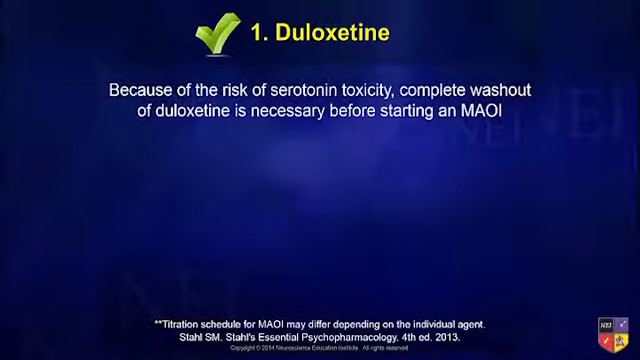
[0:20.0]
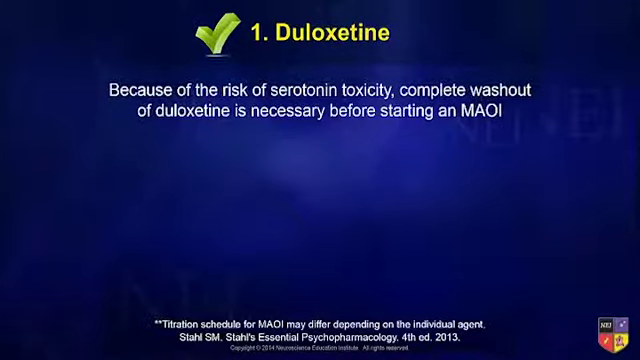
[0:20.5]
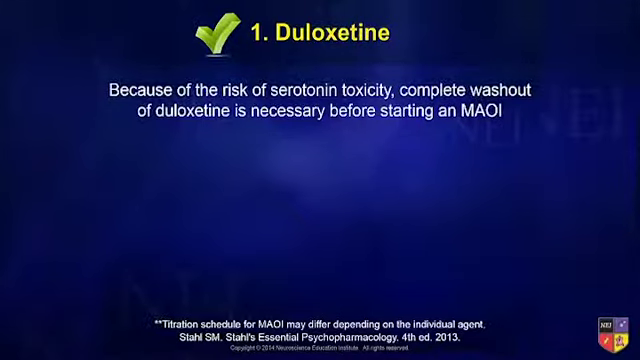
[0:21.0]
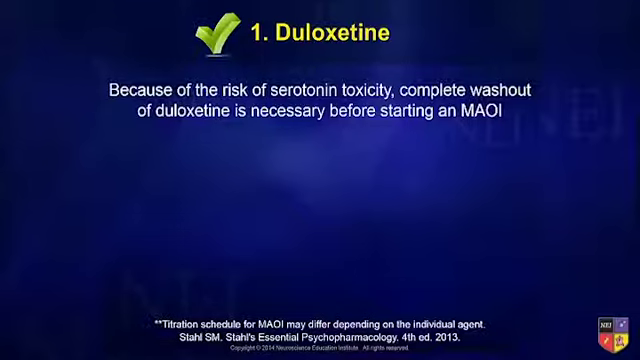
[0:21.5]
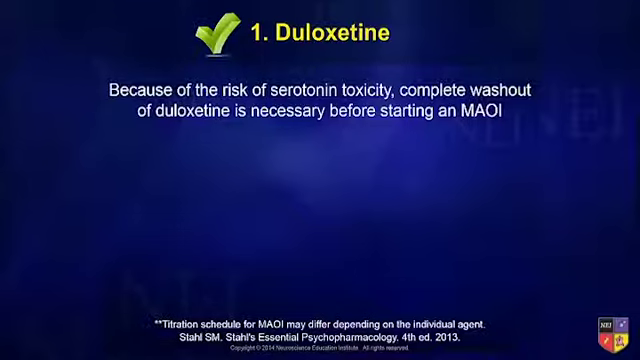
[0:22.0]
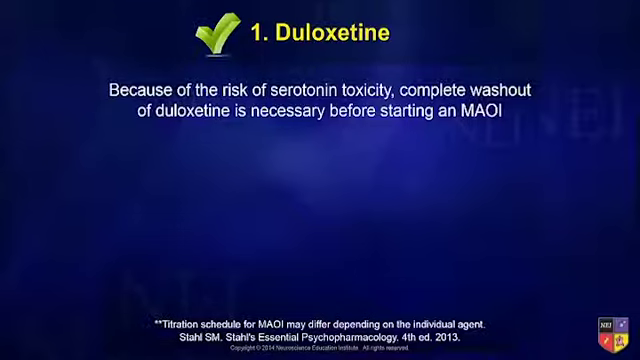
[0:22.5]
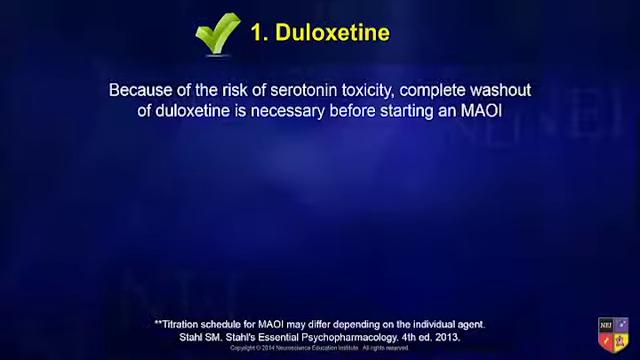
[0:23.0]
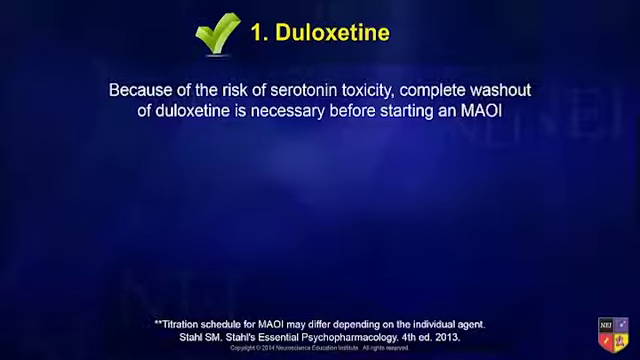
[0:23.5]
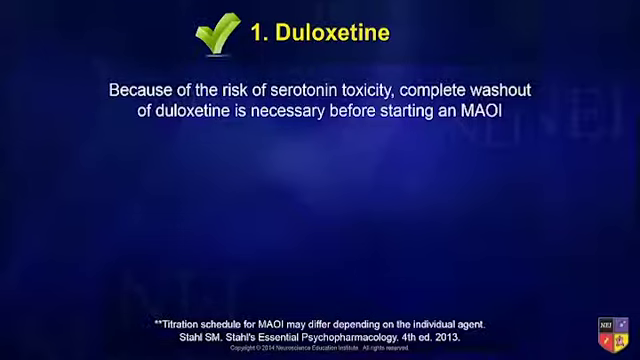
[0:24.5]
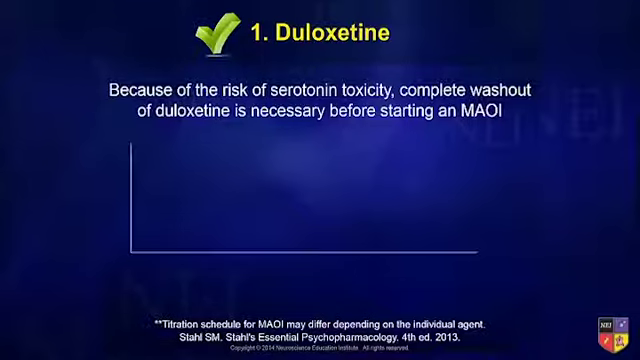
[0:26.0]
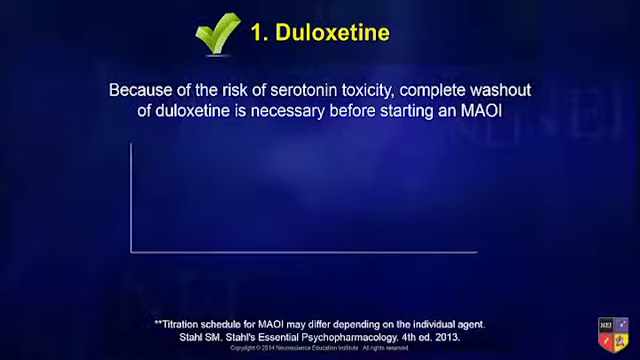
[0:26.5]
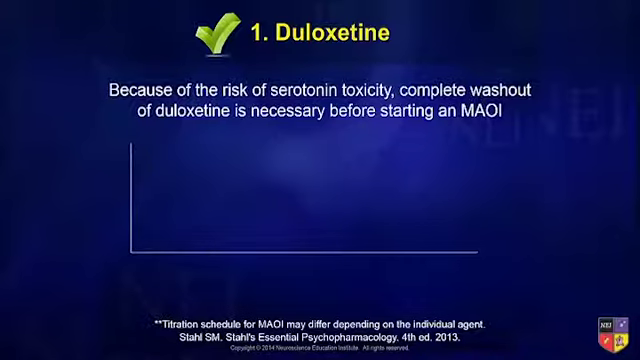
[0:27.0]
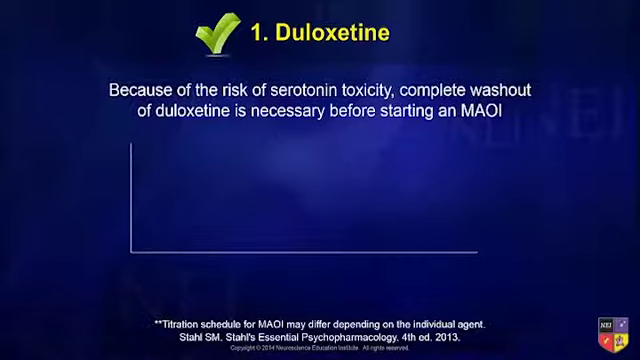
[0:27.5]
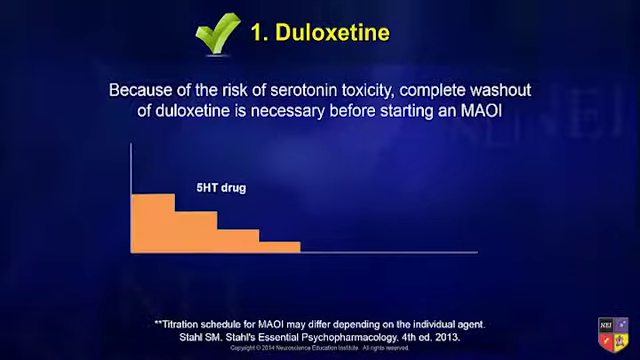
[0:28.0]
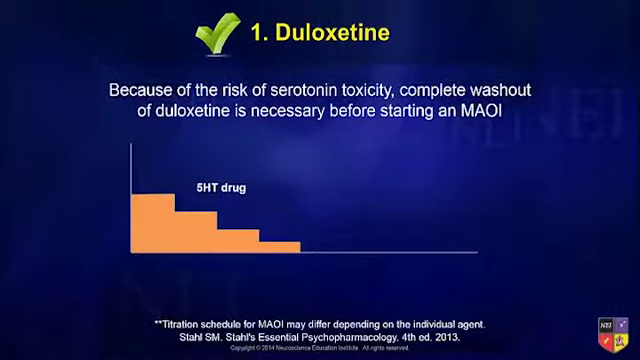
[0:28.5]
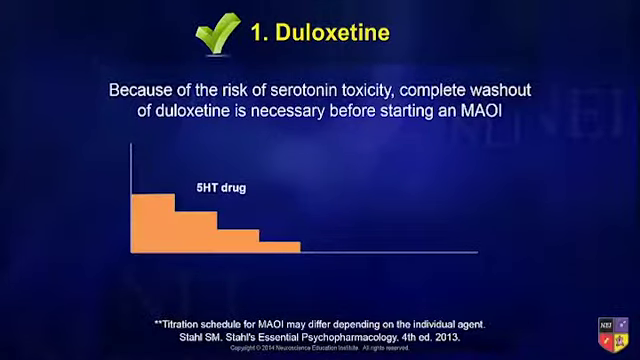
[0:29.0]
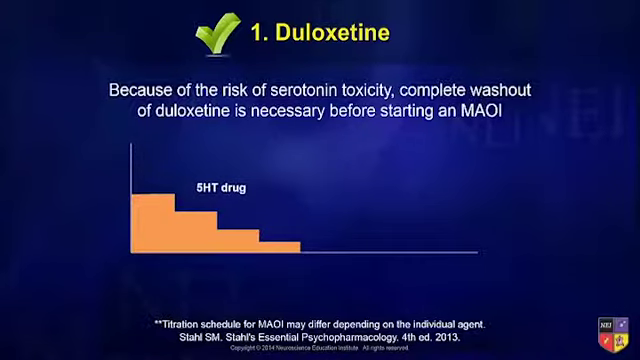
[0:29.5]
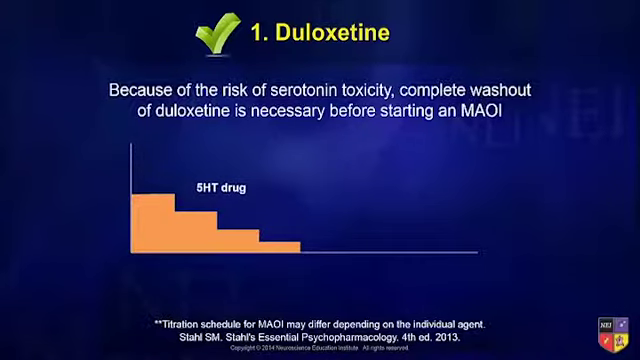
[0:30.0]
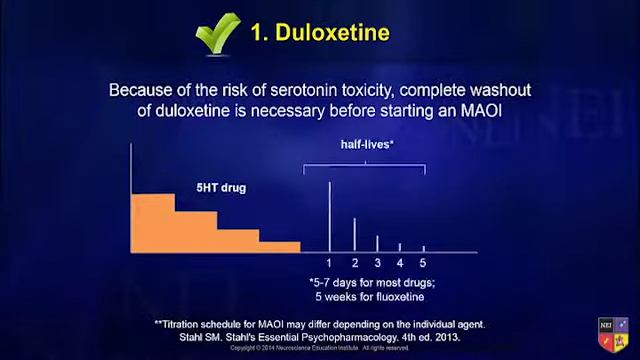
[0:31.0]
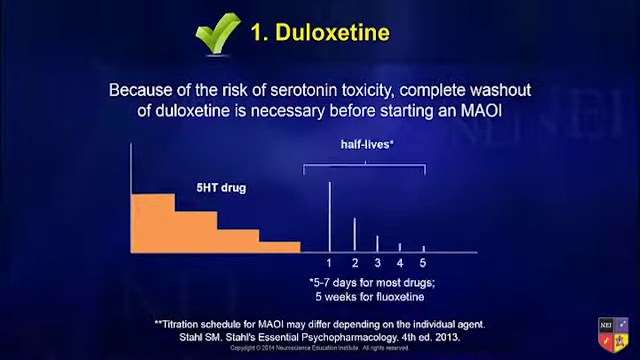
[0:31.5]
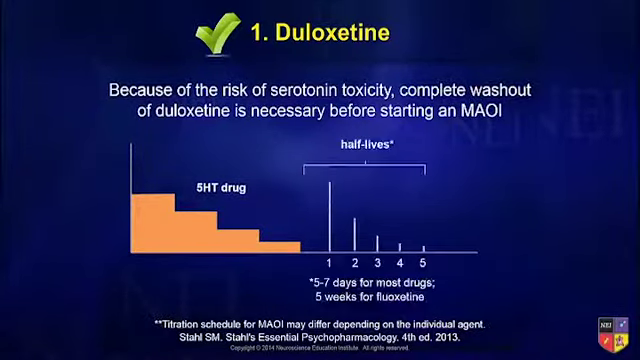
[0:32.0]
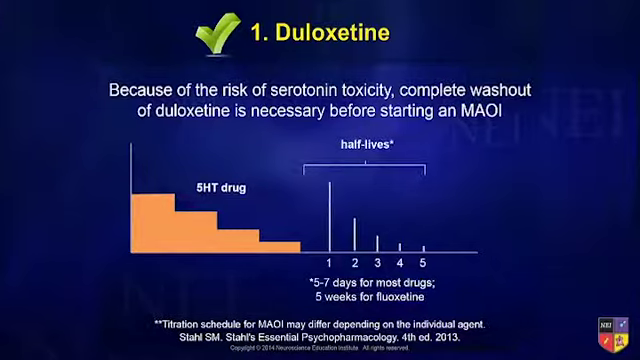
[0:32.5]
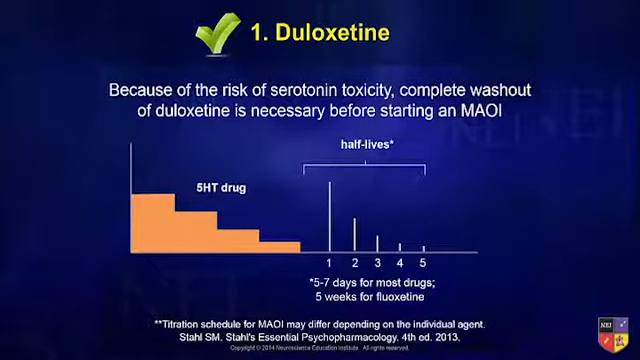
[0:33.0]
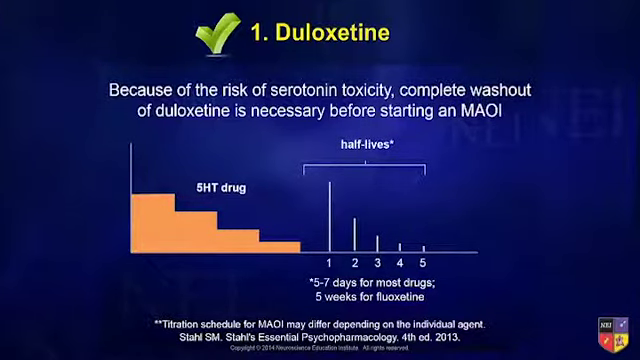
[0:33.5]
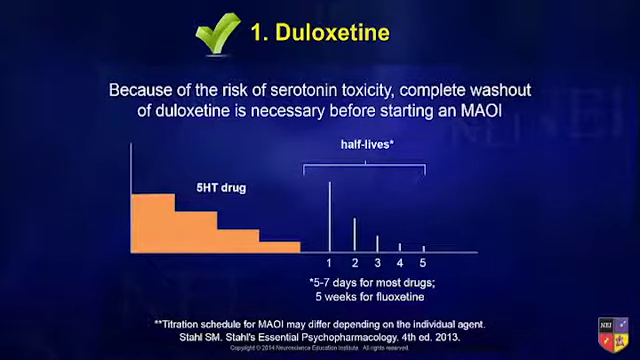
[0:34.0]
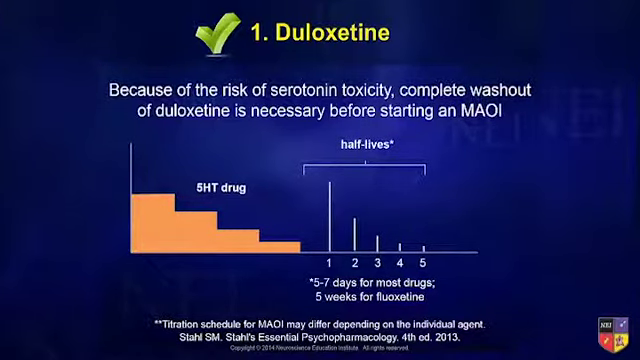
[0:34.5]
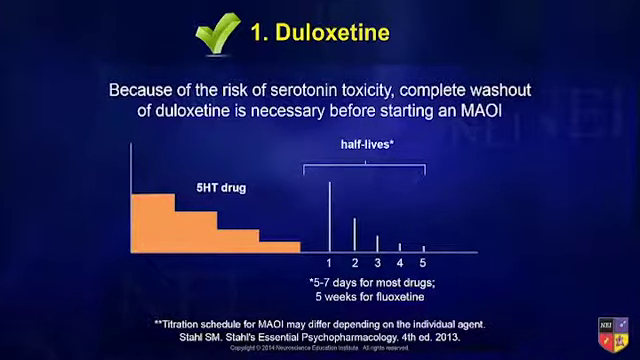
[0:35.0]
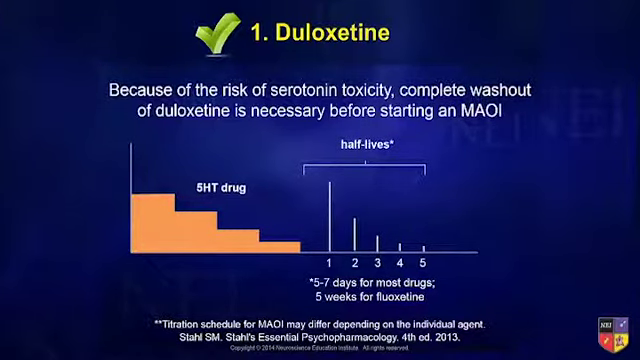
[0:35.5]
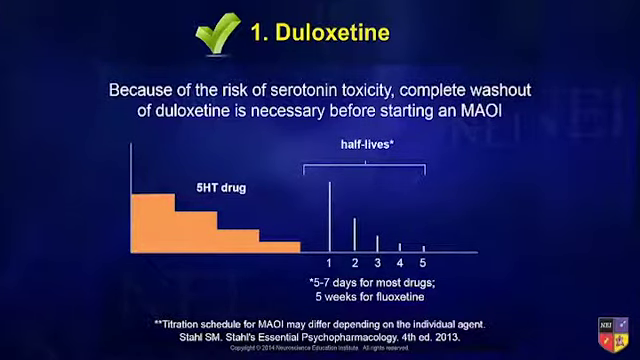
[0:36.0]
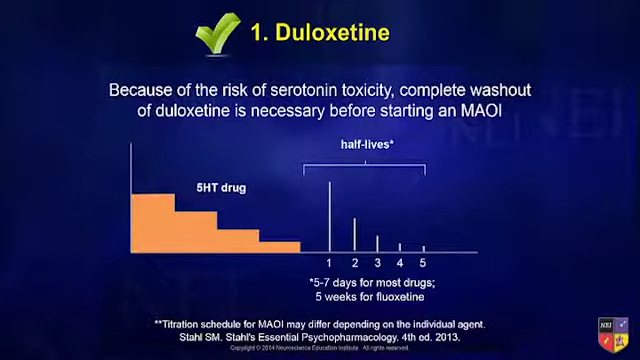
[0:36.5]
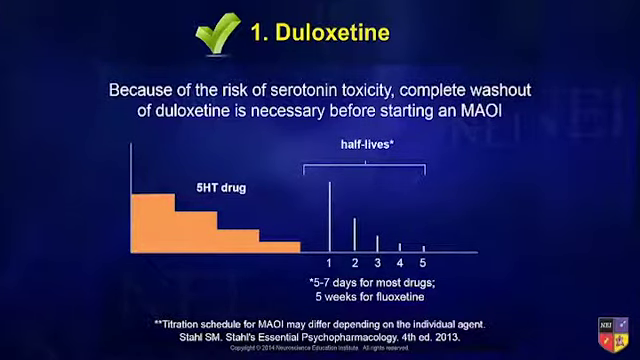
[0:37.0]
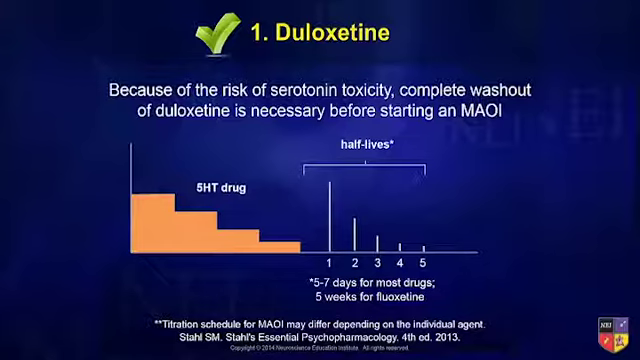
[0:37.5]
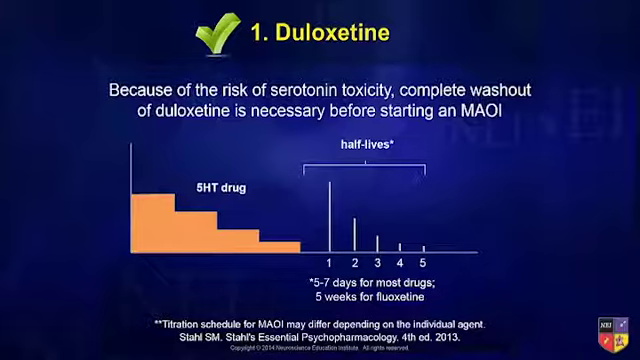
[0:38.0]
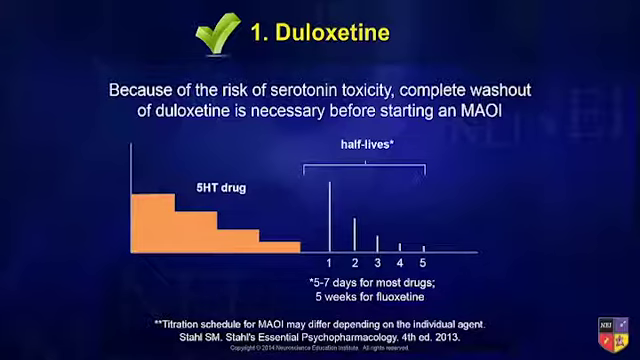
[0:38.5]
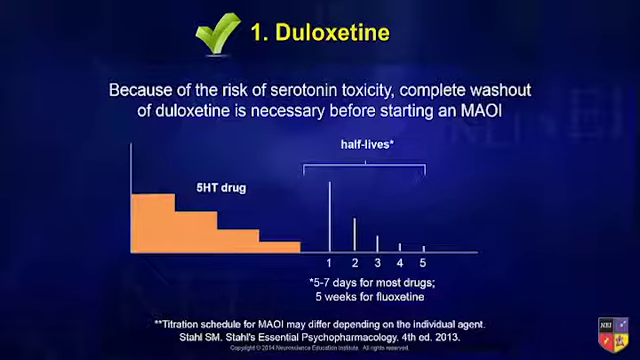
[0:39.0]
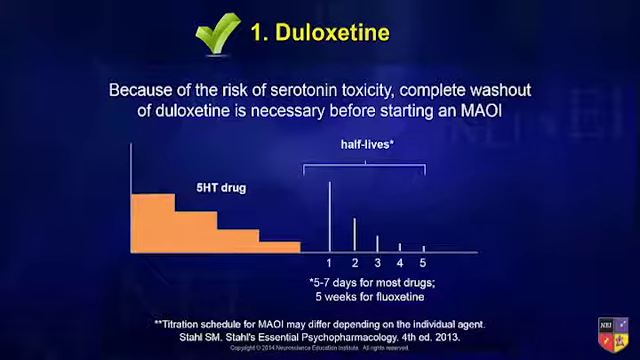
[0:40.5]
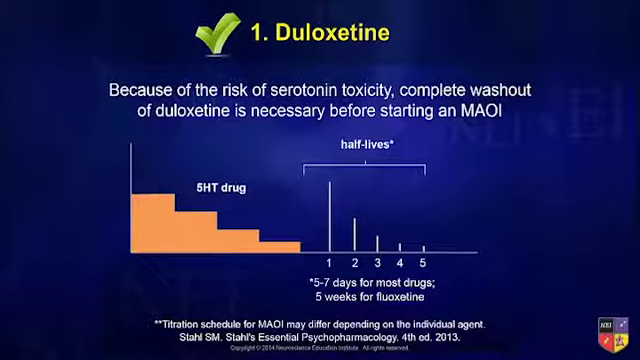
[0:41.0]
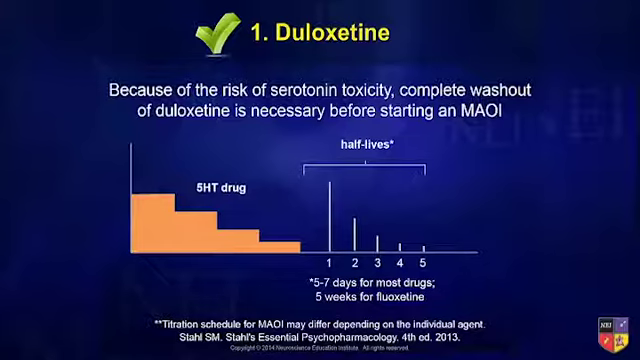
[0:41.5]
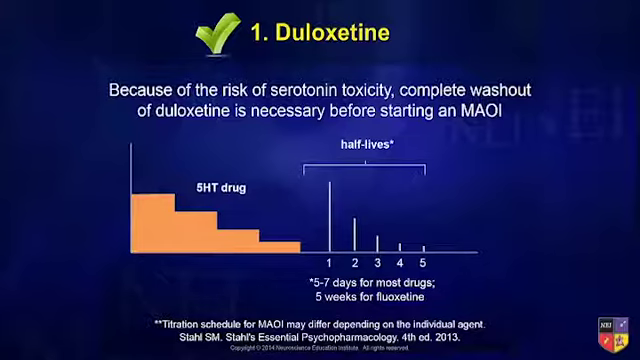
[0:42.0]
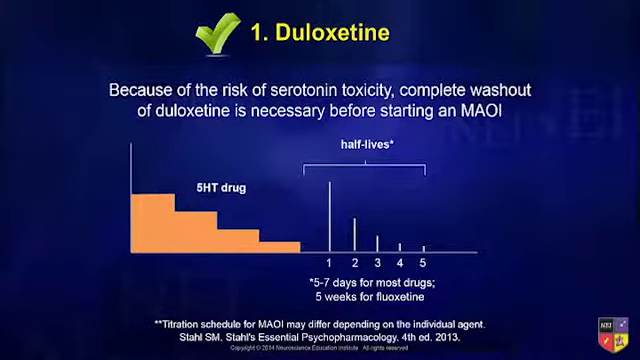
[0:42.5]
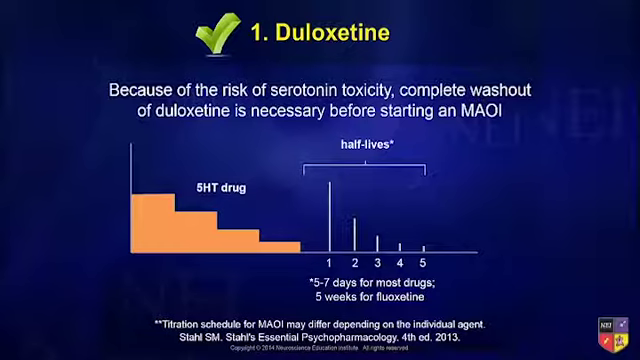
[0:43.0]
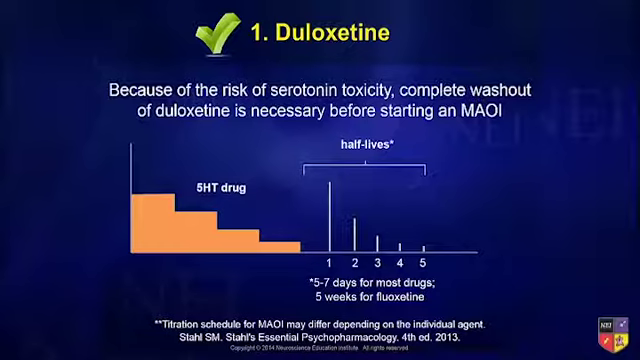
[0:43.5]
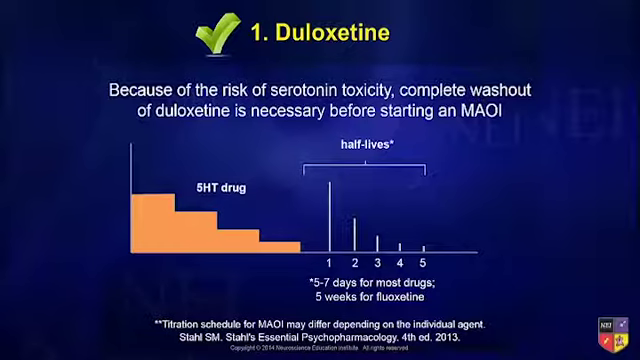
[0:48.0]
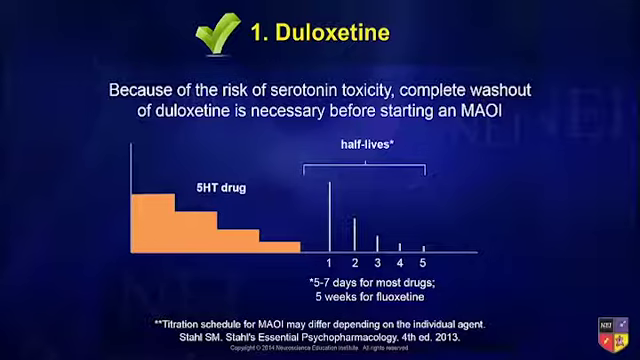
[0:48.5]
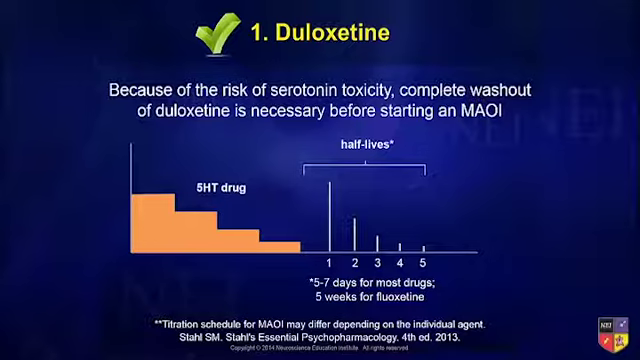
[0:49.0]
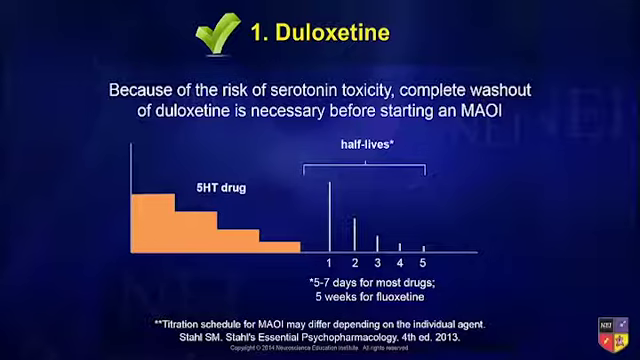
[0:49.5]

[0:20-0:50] The blue screen remains, with the yellow text "1 duloxetine" at the top beside a green tick, the white explanation underneath and the disclaimer at the bottom. A bar graph appears in the middle of the screen with four orange bars that descend in height, and white text reading "5-HT Drug" above the bars. To the right of the bar chart, numbers 1, 2, 3, 4, 5 appear along the bottom of the x-axis, descending in height, with a hard-edged half bracket above them and a small upward line pointing to text reading "half lives" with a star next to "lives". Beneath the numbers on the x-axis, another star is followed by text reading "five to seven days for most drugs five weeks for fluoxetine".